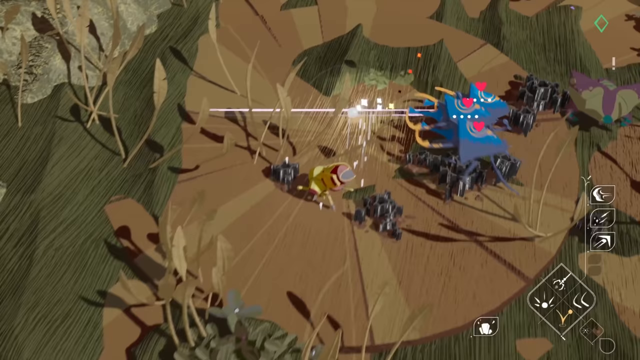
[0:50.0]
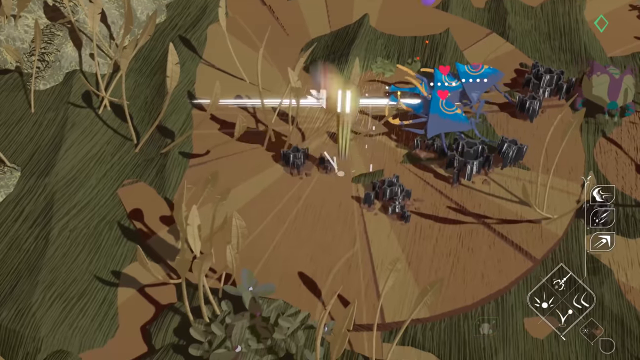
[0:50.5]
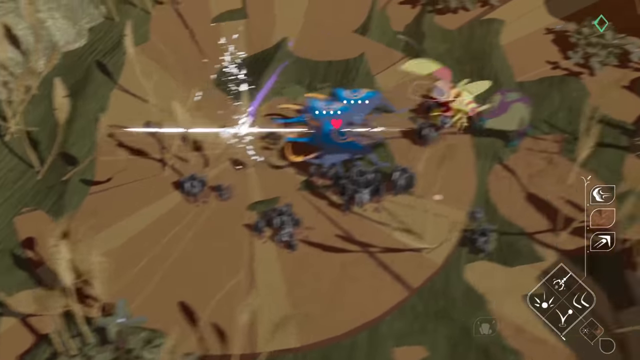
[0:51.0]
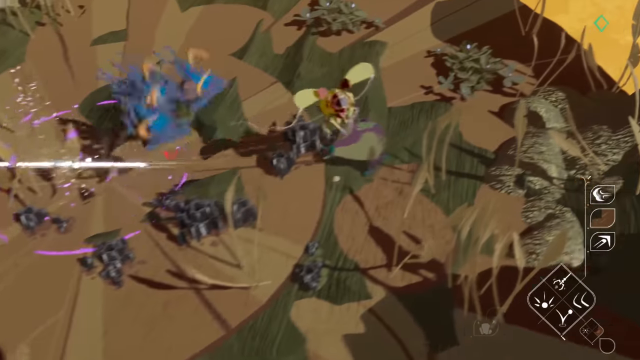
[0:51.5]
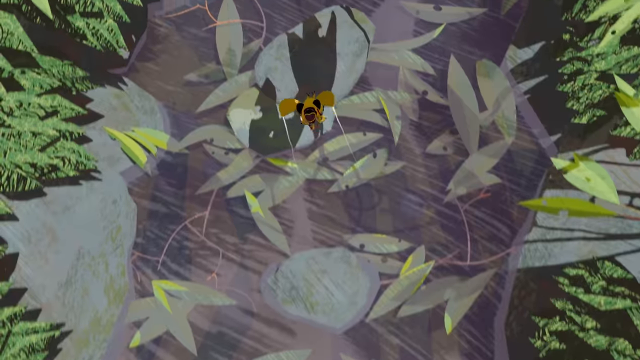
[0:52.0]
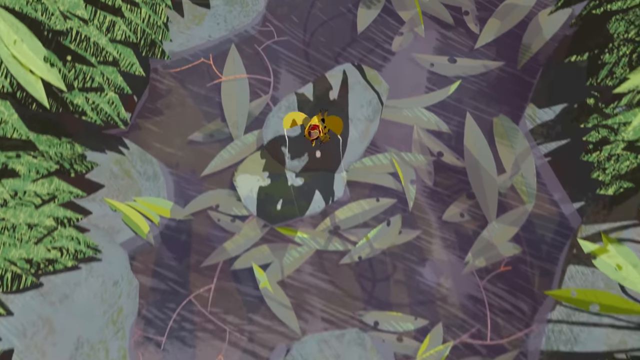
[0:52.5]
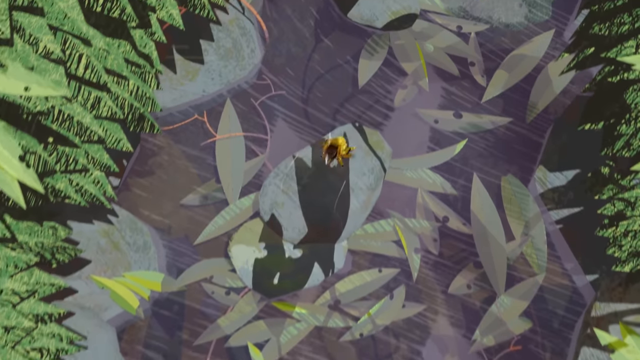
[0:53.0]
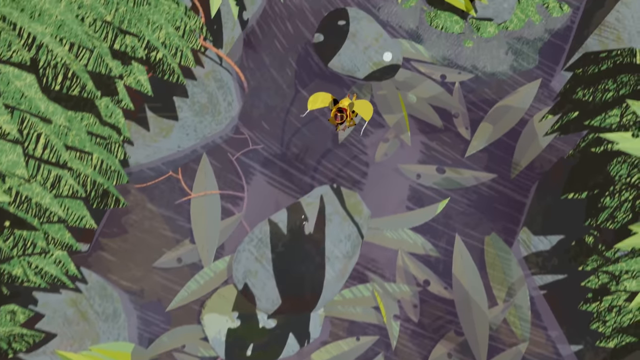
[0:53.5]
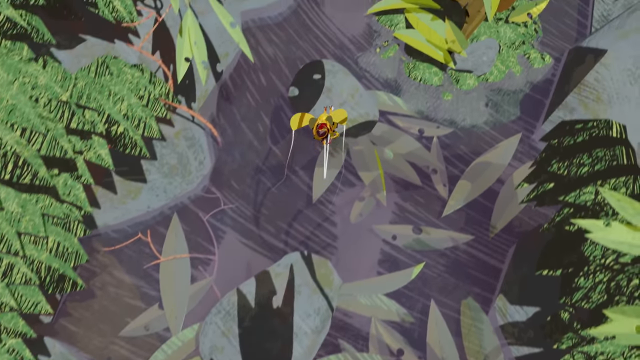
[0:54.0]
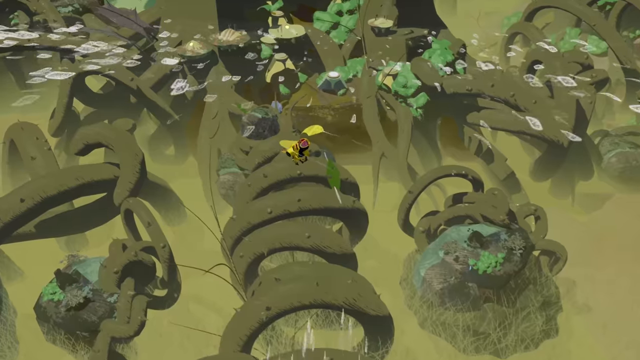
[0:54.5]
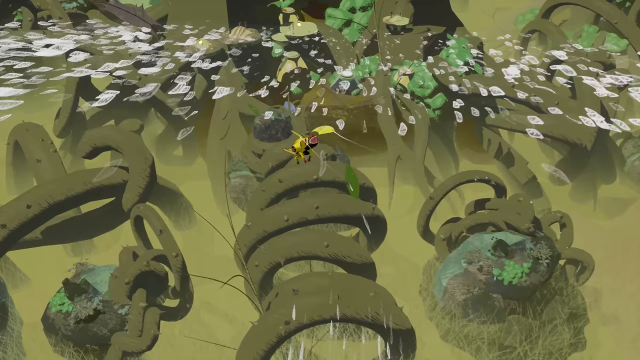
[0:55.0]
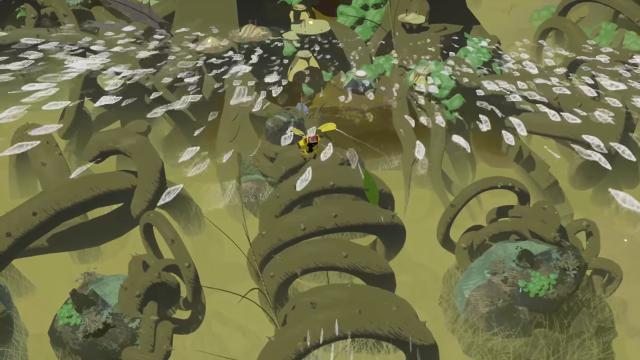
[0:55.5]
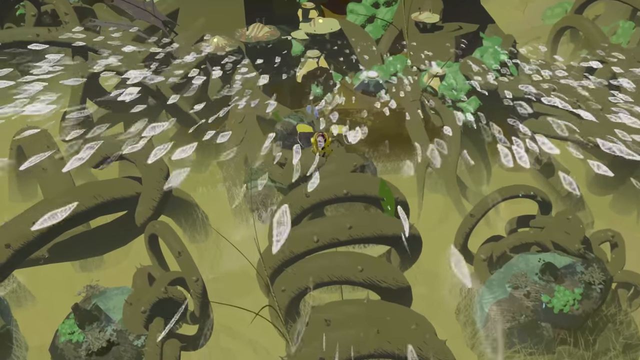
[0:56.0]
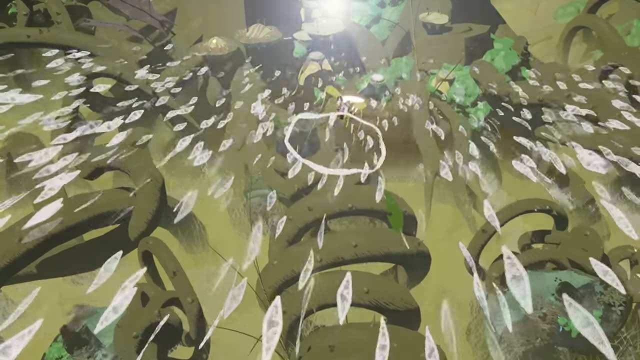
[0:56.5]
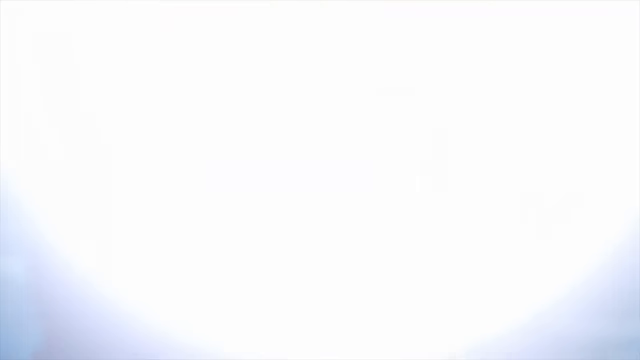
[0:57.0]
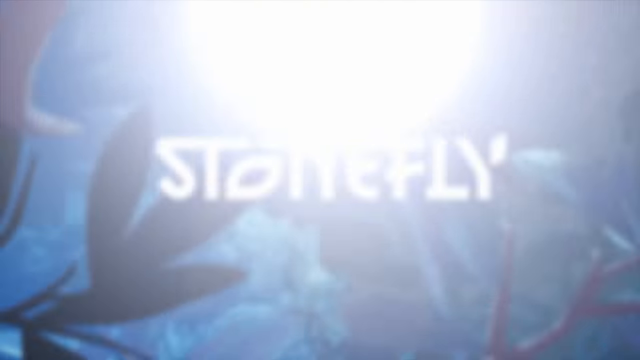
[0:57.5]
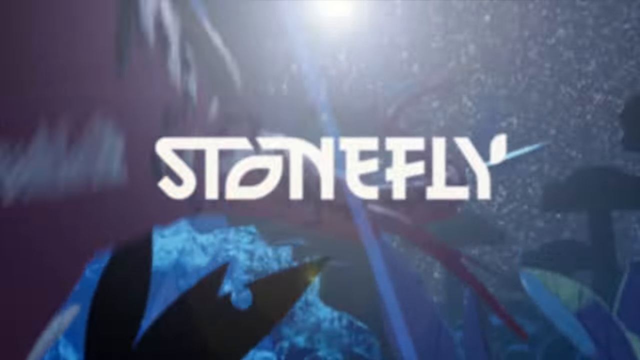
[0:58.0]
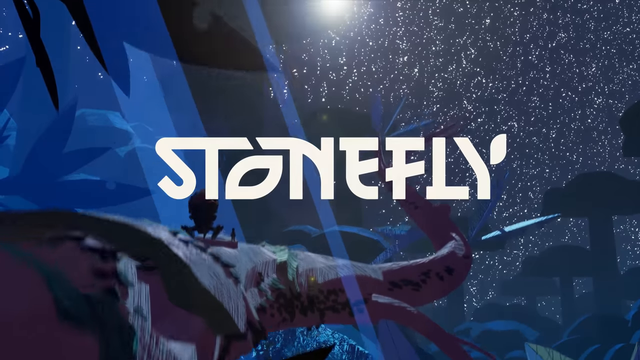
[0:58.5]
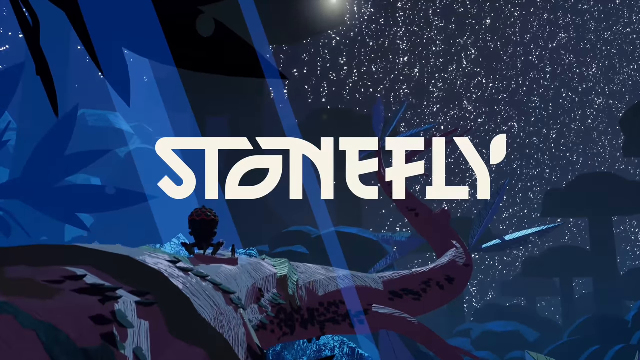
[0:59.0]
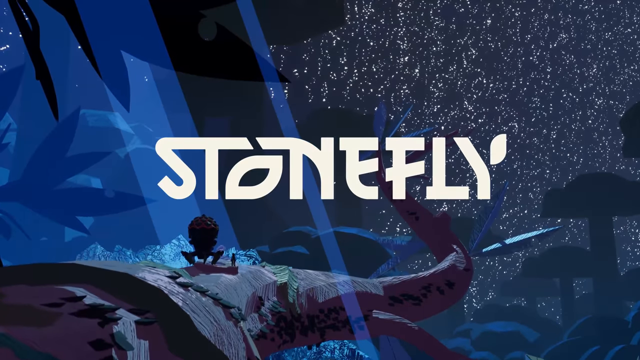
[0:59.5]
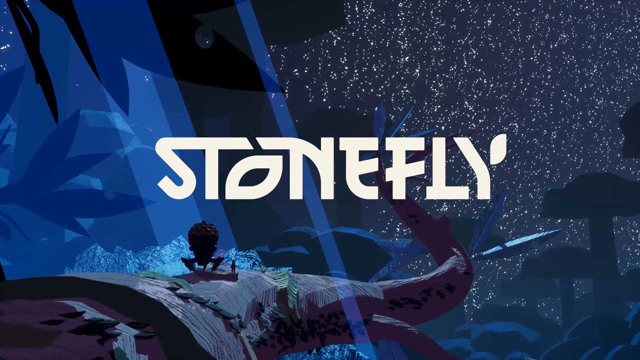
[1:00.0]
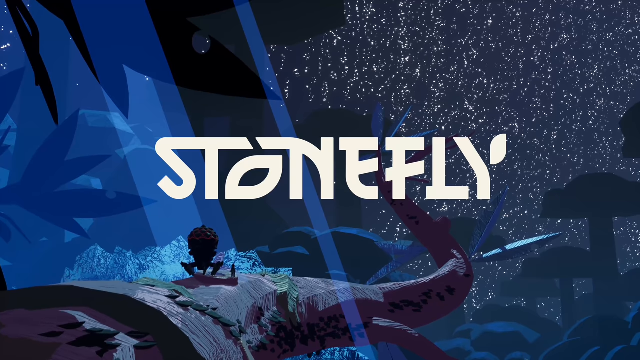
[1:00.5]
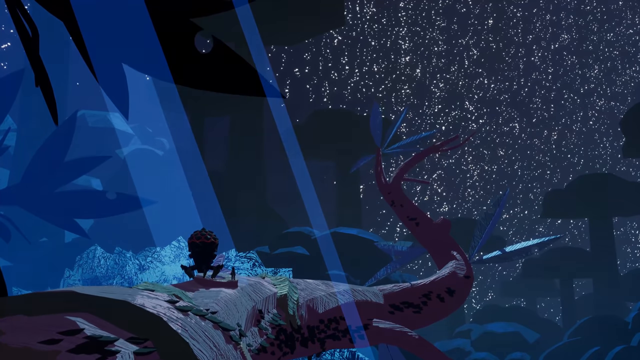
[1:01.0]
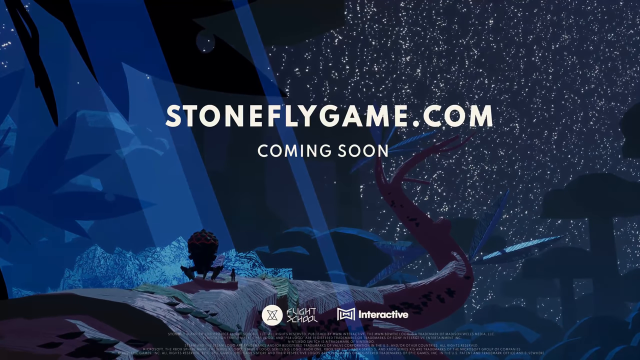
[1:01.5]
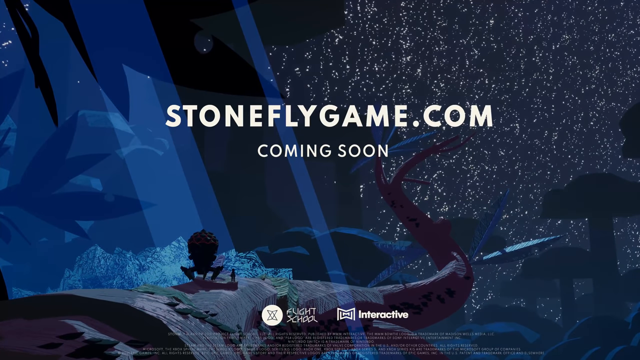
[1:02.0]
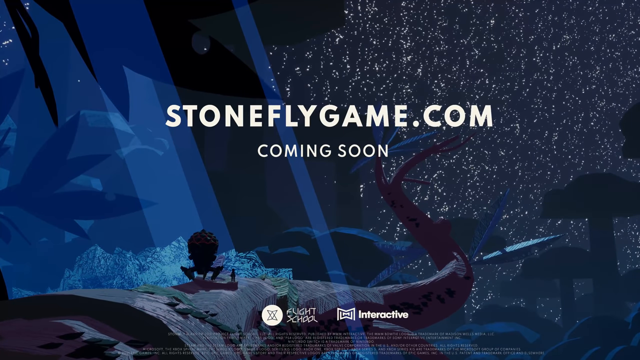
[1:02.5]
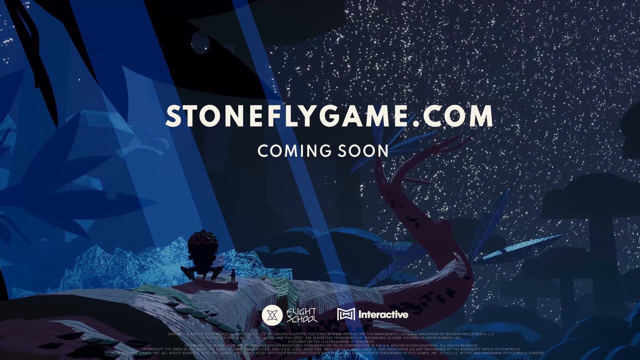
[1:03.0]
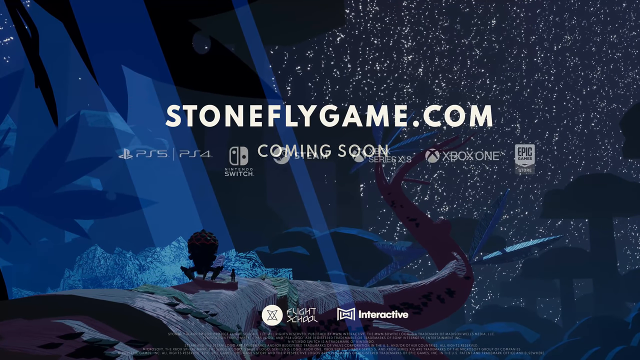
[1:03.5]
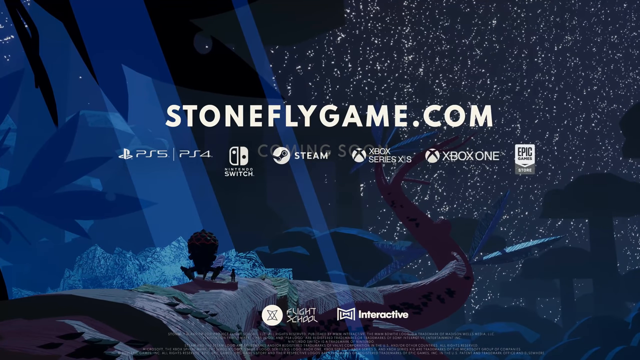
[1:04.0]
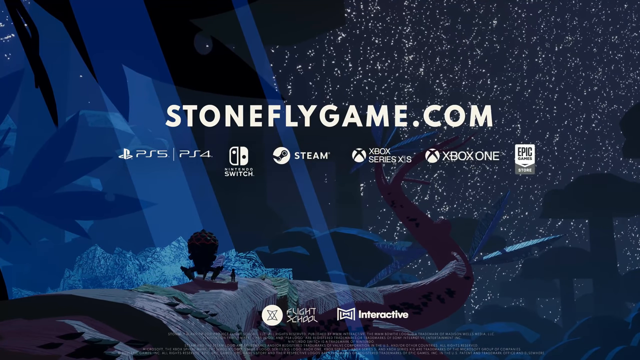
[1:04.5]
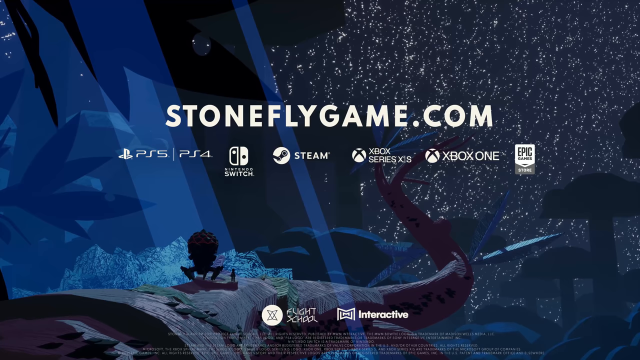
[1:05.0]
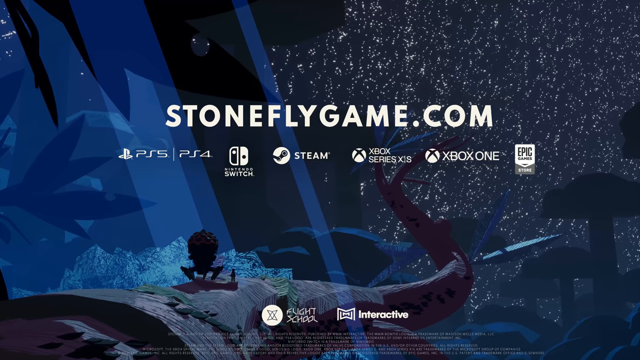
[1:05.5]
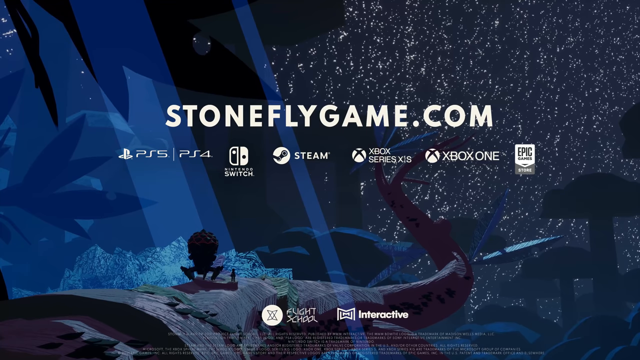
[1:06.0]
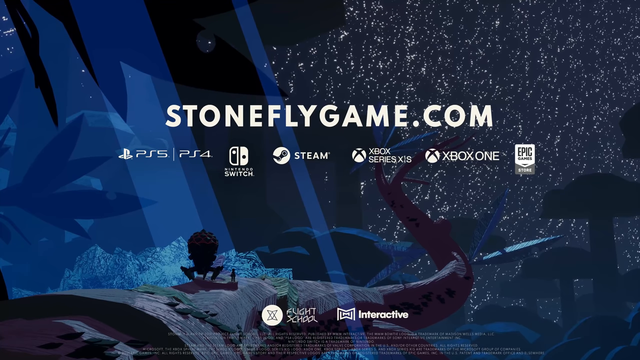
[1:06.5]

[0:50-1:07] The title of the game, "Stonefly", is displayed. The video is a trailer for the game rather than someone playing it. The main character appears to board a small flying vehicle that resembles an insect.